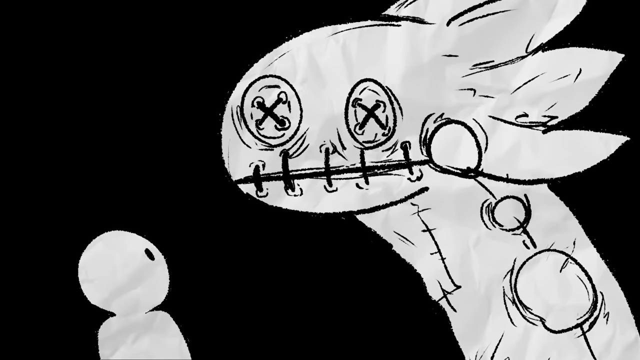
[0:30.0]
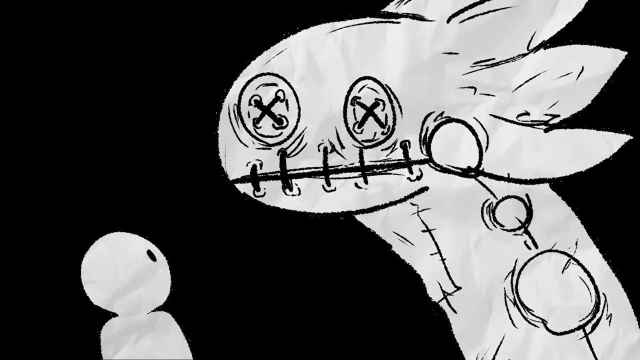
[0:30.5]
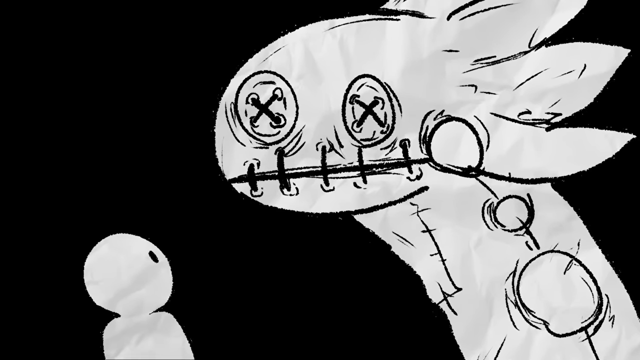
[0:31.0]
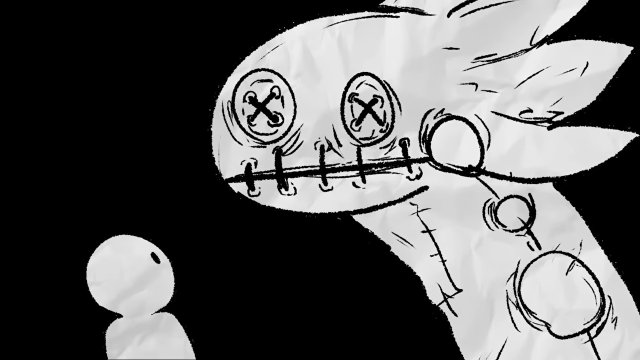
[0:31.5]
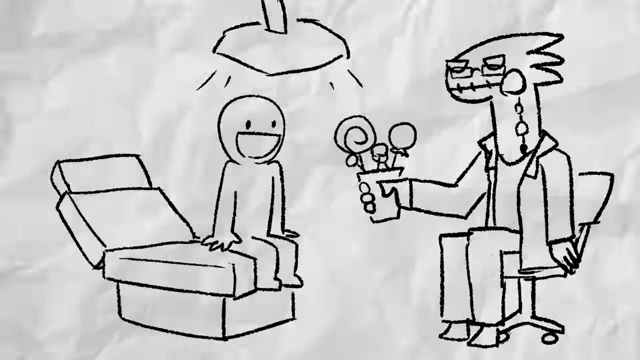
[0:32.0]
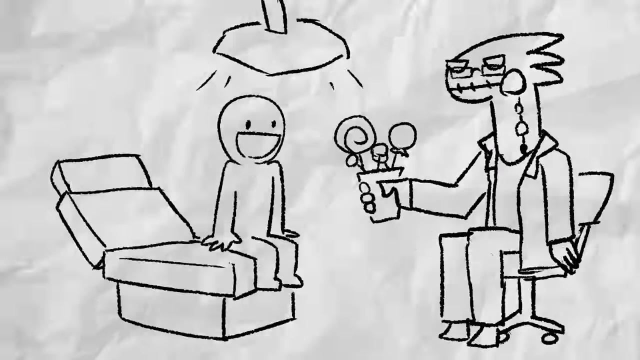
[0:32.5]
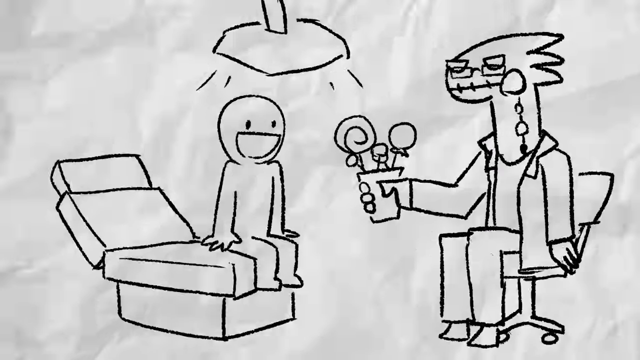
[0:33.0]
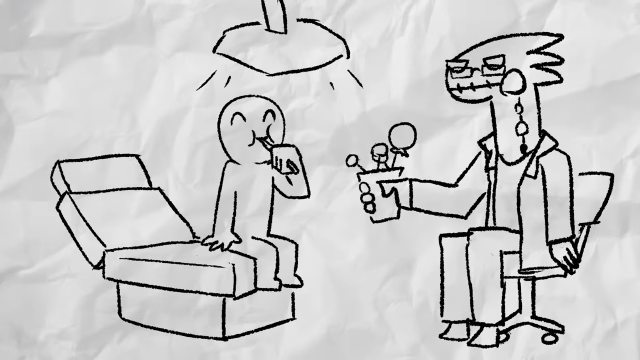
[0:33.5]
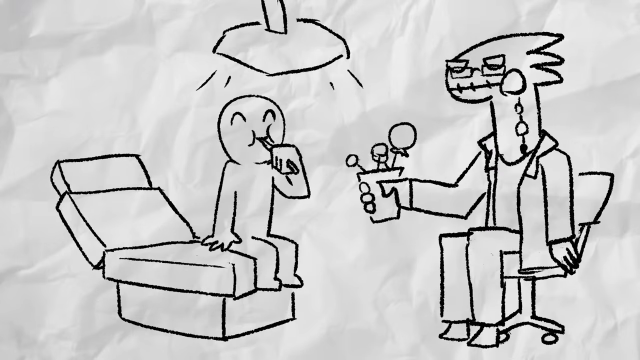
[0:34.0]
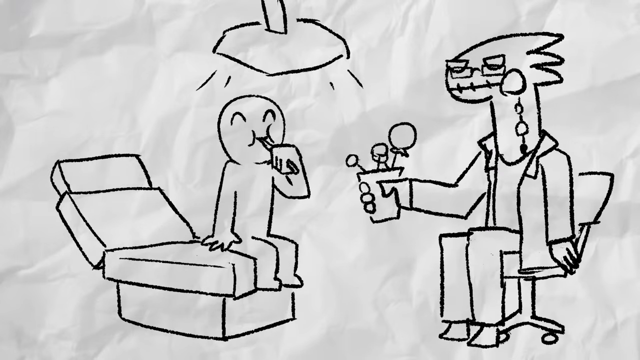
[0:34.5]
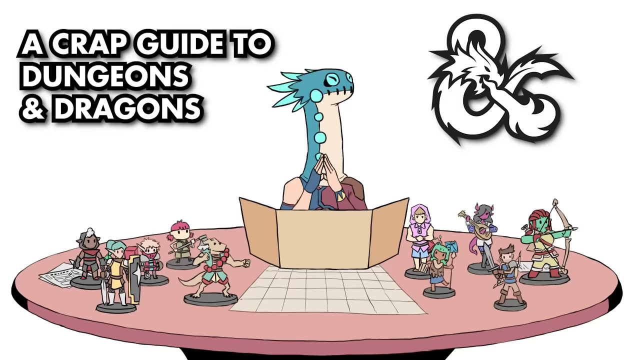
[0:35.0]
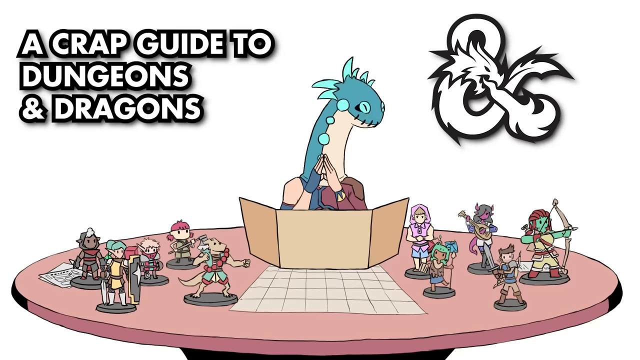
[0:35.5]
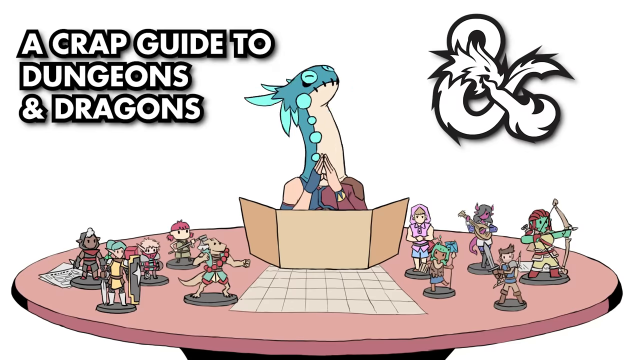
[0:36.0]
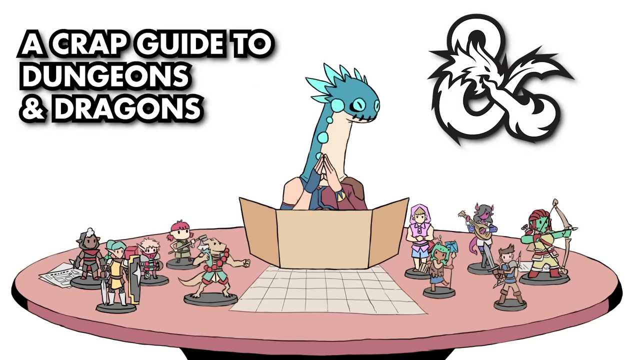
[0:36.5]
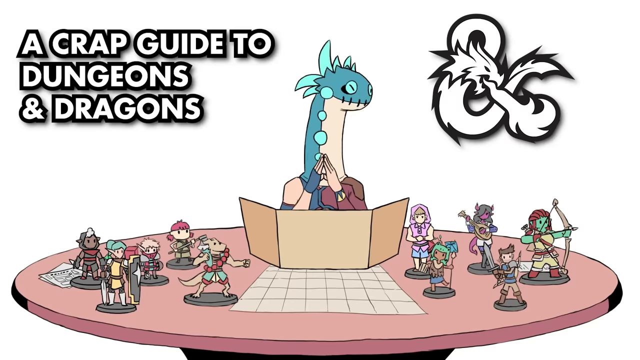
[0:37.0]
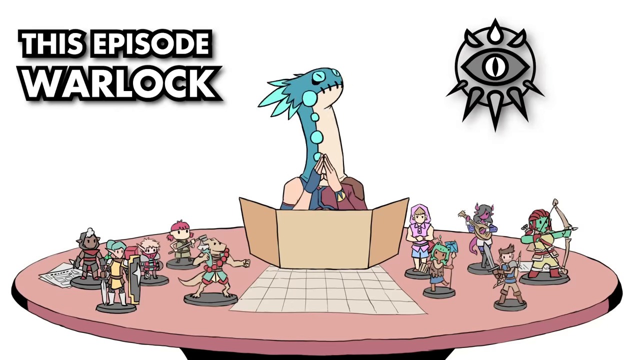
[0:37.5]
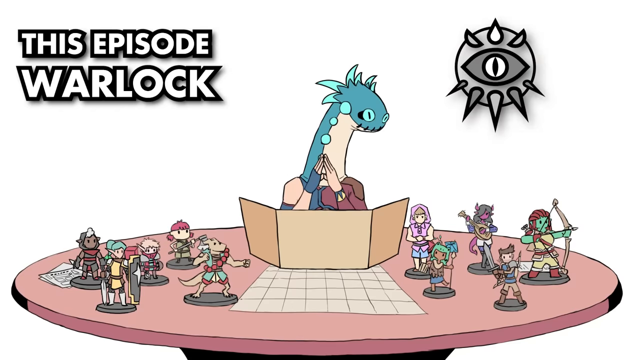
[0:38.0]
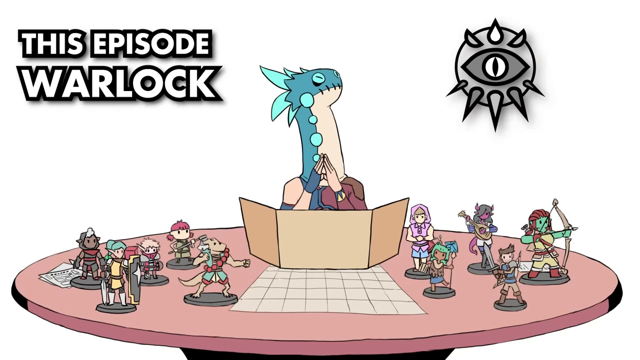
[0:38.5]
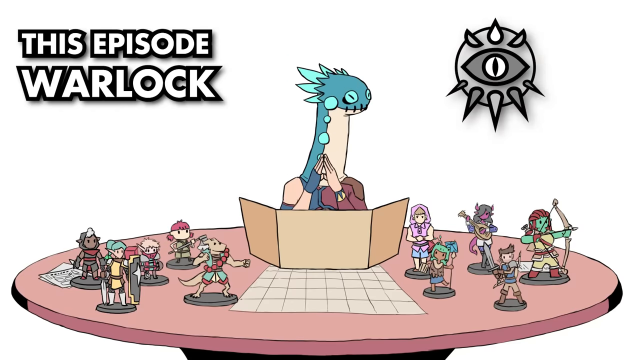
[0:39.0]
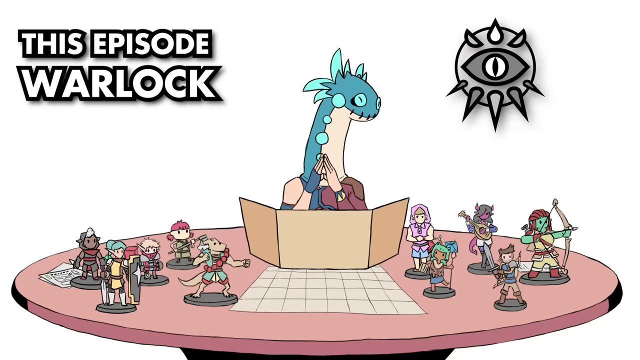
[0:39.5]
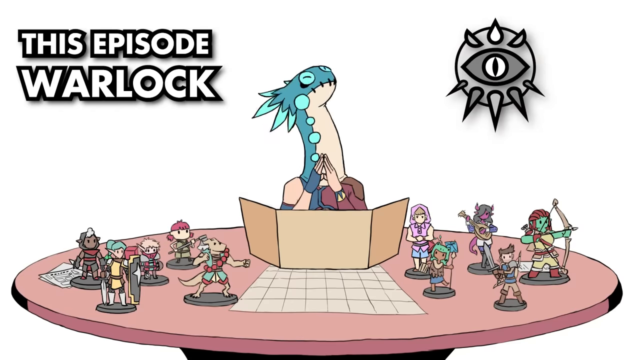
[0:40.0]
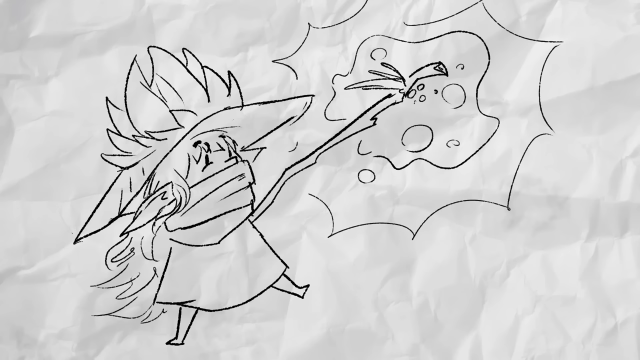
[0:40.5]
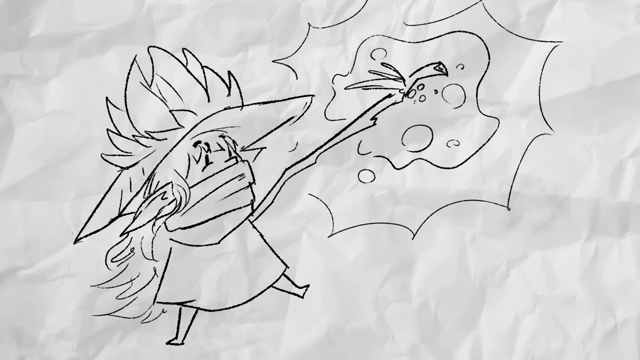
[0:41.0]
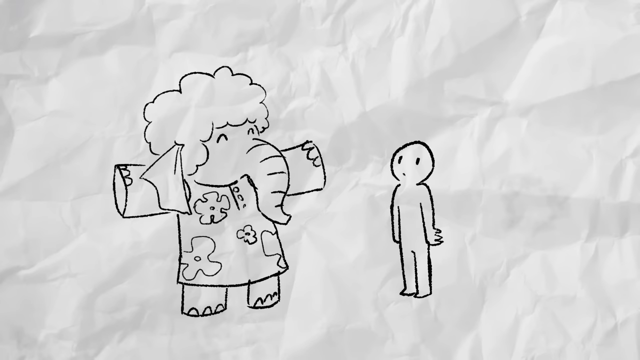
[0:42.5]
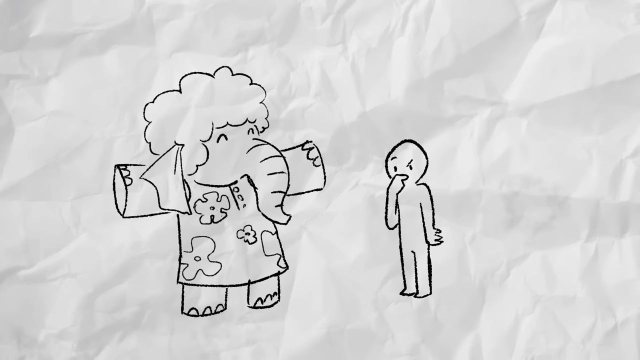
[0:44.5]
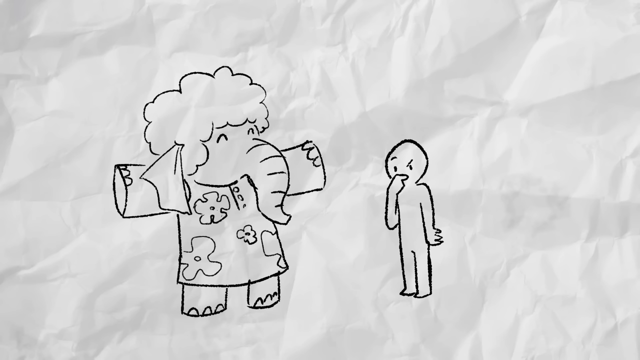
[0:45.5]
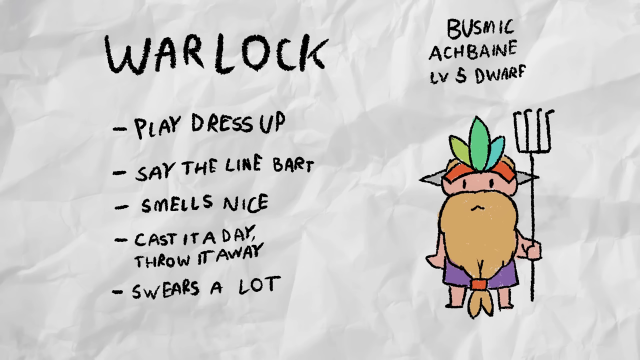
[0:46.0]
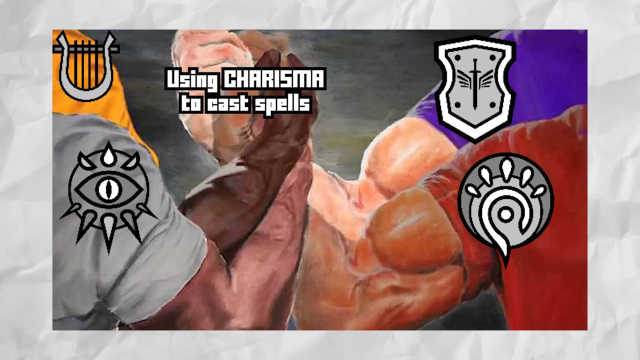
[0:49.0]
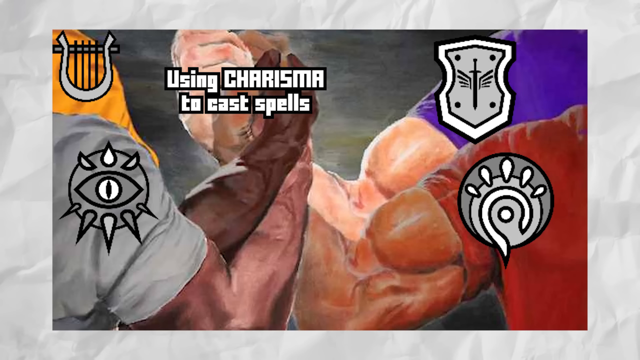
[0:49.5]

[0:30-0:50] On a black background, characters are drawn in white in what looks like a pencil drawing, playing out a character's life. A giant, dinosaur-looking monster appears; it seems to have buttons with X's for eyes and its mouth taped together. The monster gets a little bigger, and then the man goes to the doctor and sucks on a sucker. This all appears to be an intro to a humorous video about how to play Dungeons & Dragons. The scenes go through all sorts of situations the person is in, played out as hand-drawn stick figures on crumpled white paper.